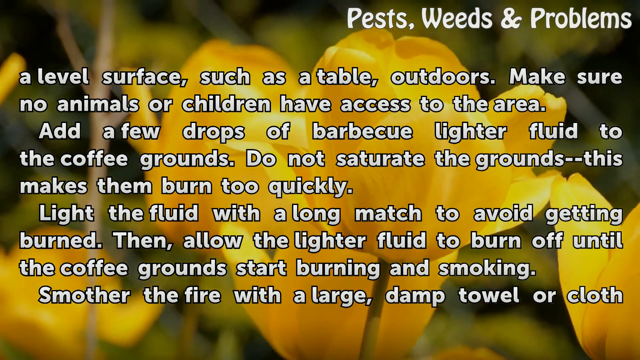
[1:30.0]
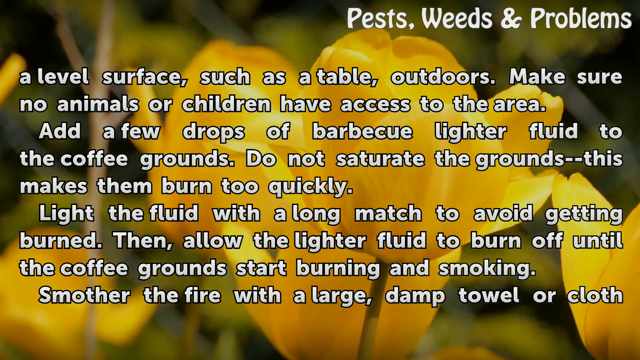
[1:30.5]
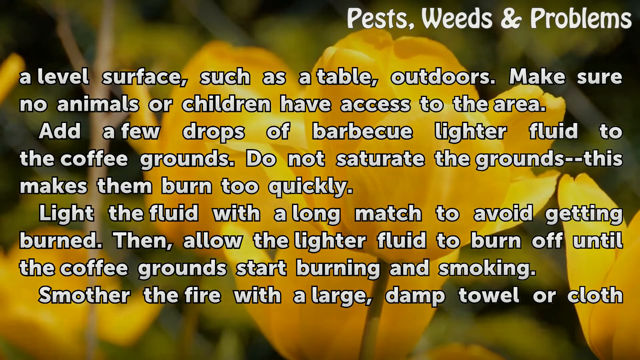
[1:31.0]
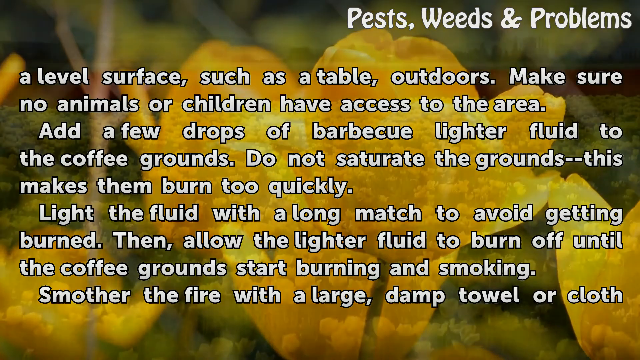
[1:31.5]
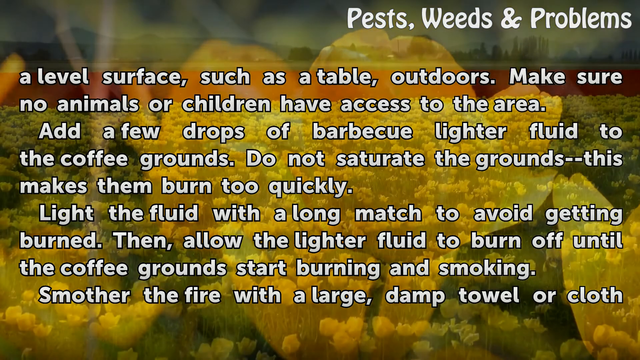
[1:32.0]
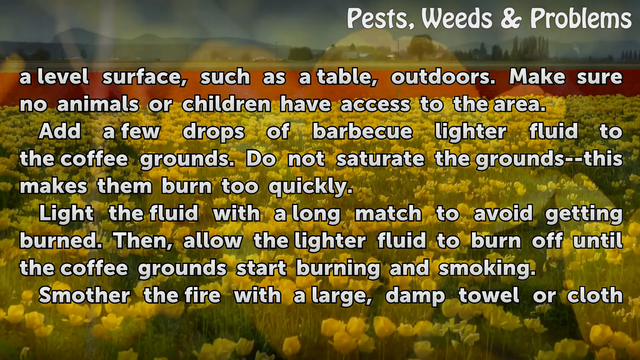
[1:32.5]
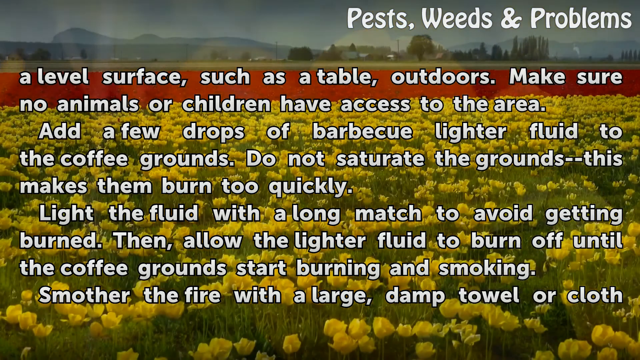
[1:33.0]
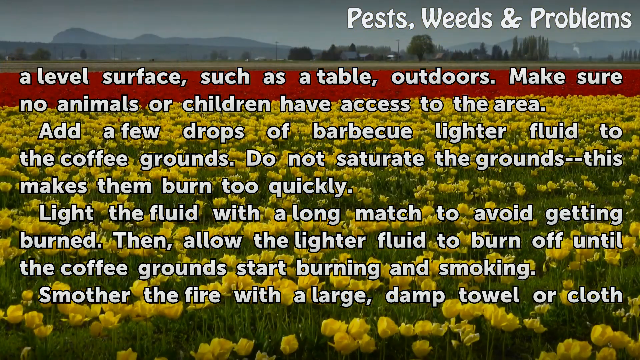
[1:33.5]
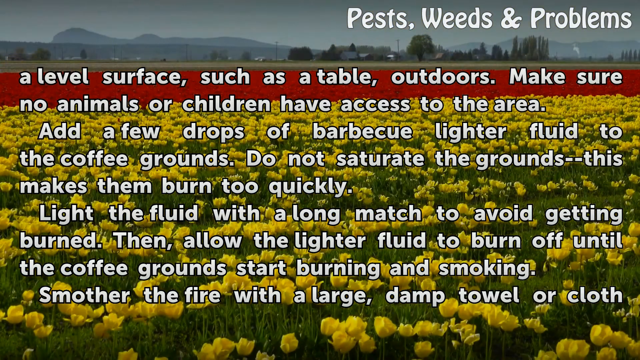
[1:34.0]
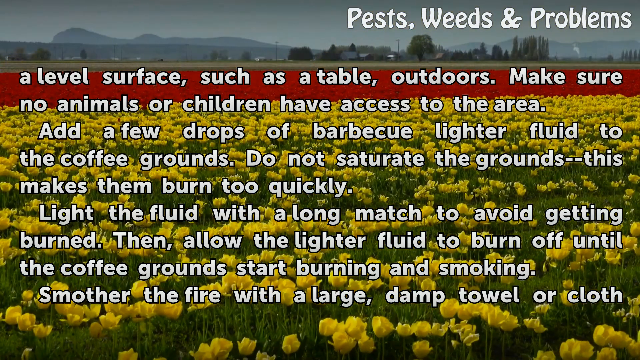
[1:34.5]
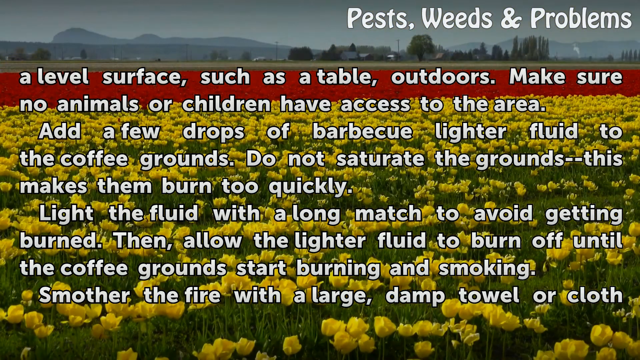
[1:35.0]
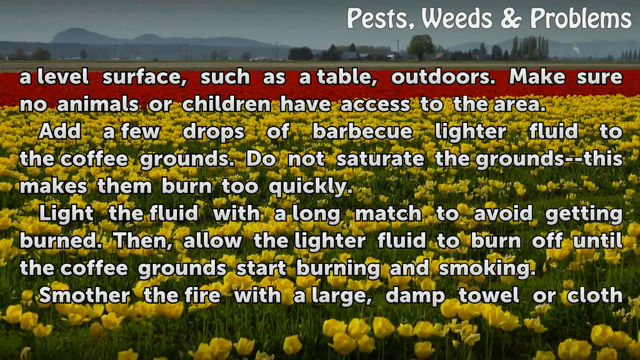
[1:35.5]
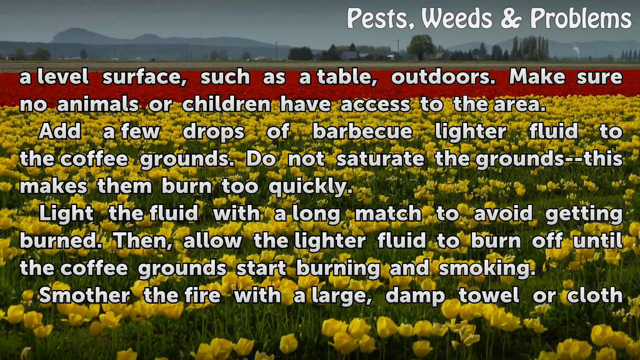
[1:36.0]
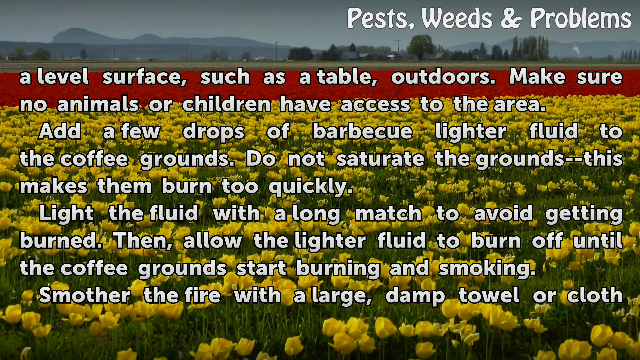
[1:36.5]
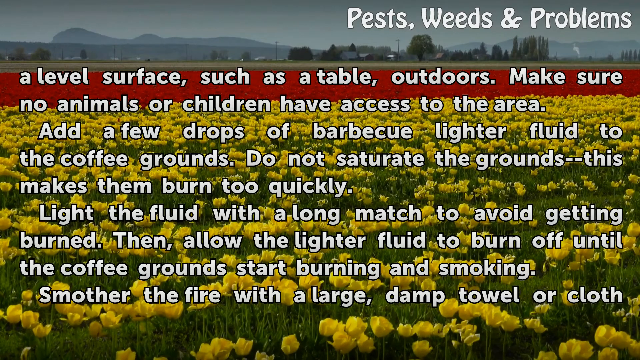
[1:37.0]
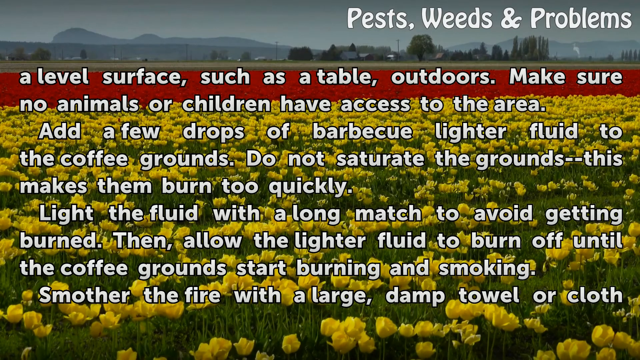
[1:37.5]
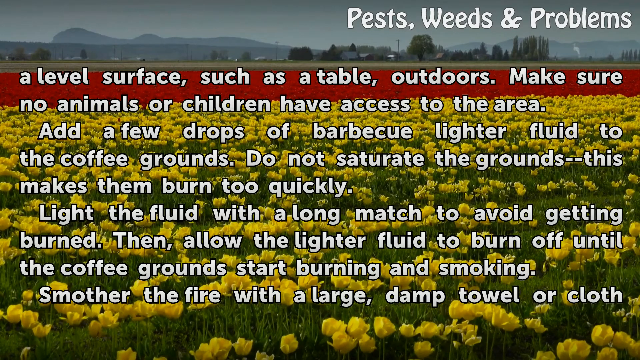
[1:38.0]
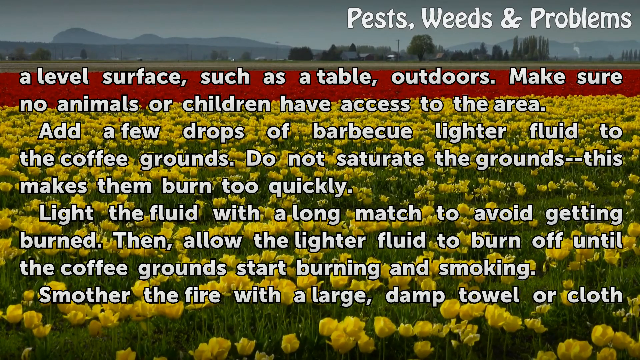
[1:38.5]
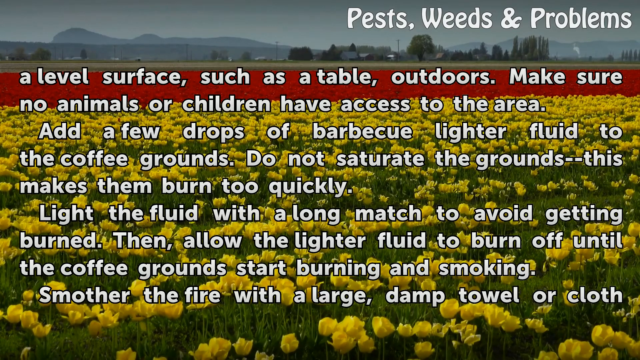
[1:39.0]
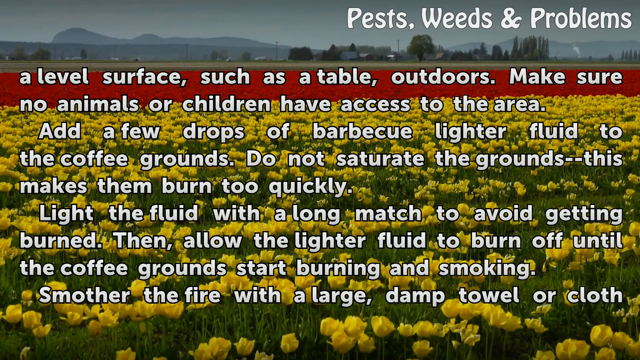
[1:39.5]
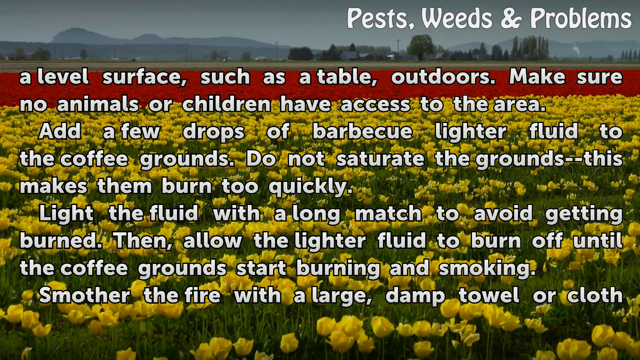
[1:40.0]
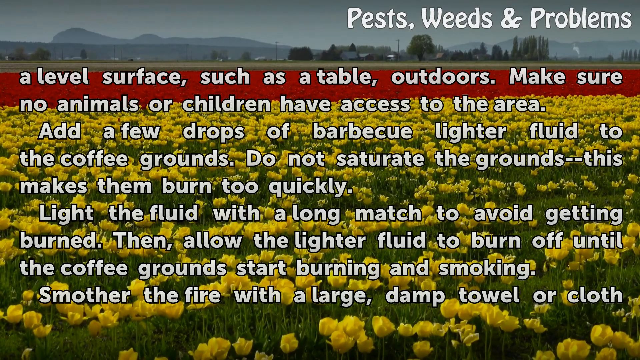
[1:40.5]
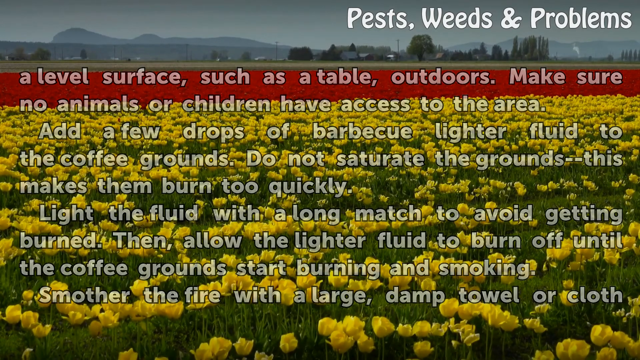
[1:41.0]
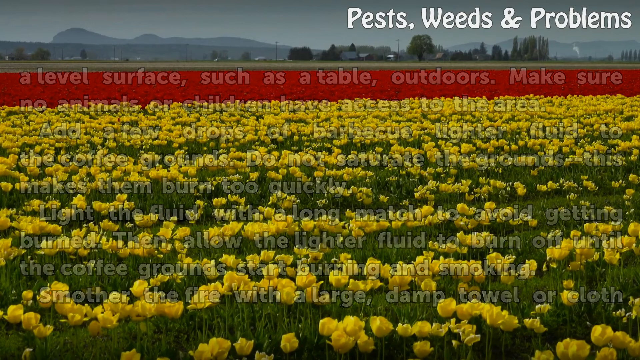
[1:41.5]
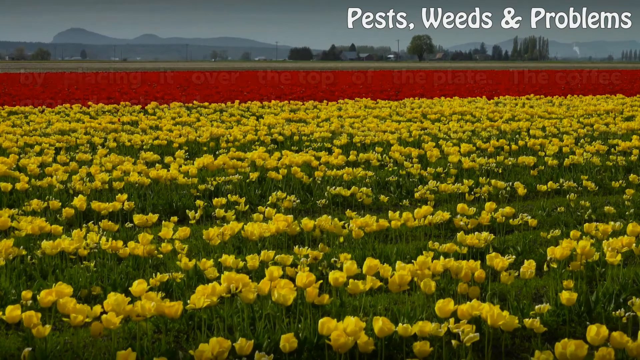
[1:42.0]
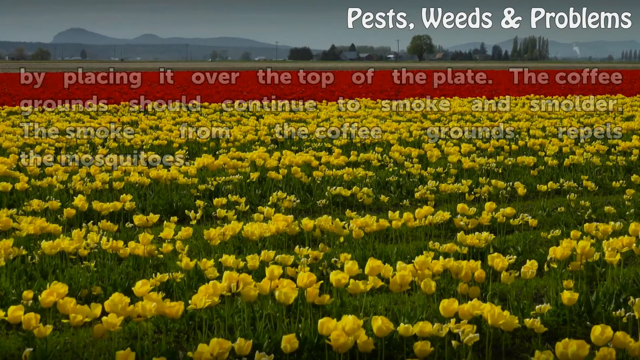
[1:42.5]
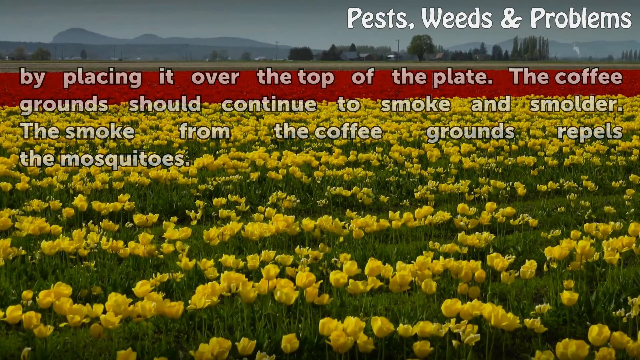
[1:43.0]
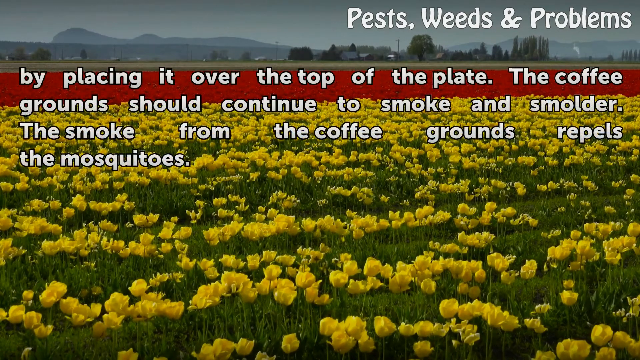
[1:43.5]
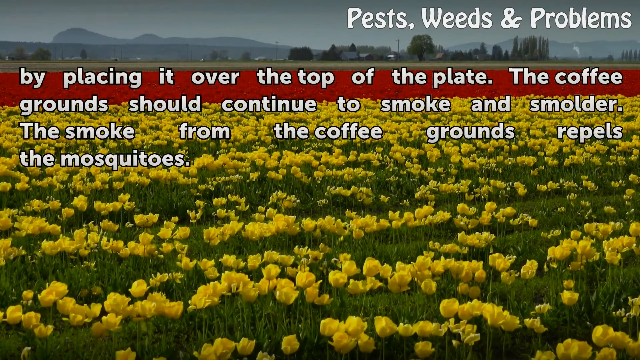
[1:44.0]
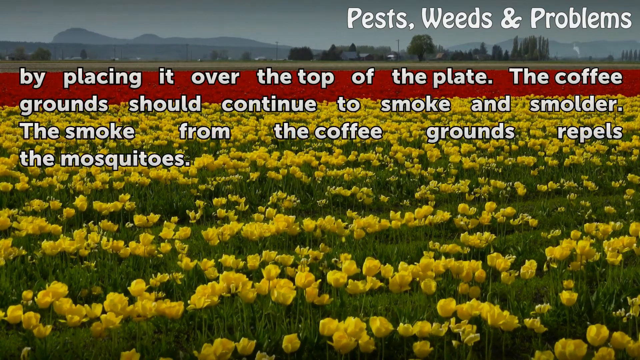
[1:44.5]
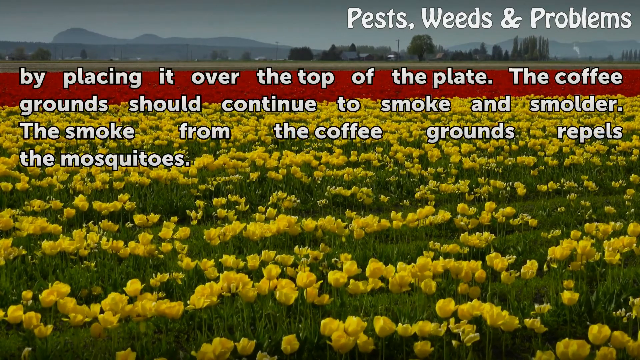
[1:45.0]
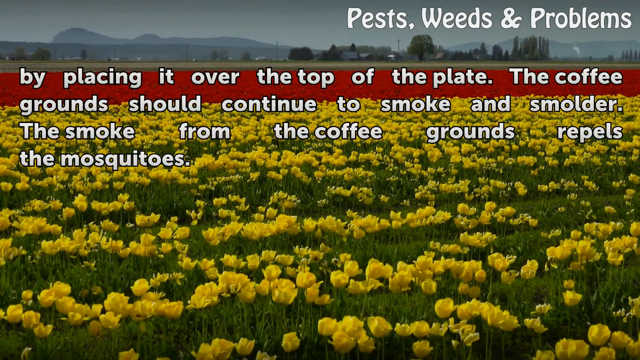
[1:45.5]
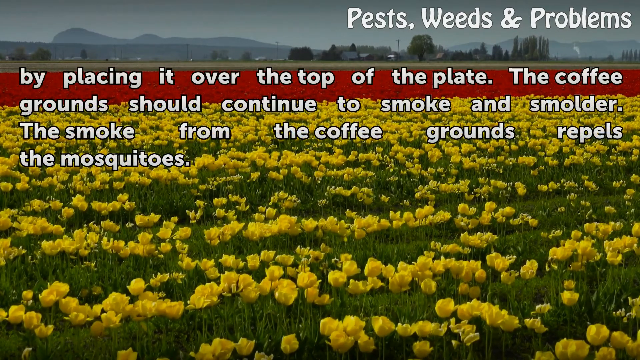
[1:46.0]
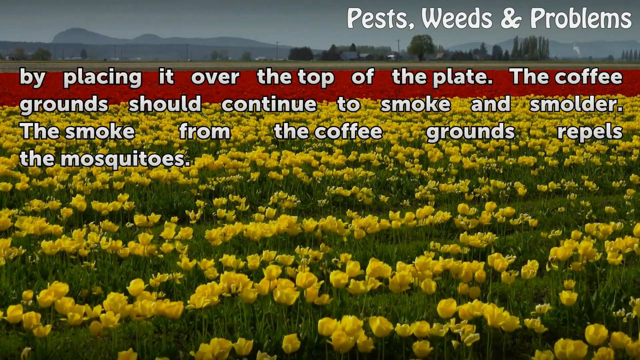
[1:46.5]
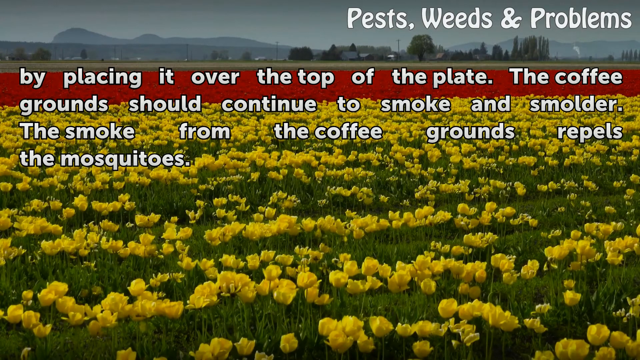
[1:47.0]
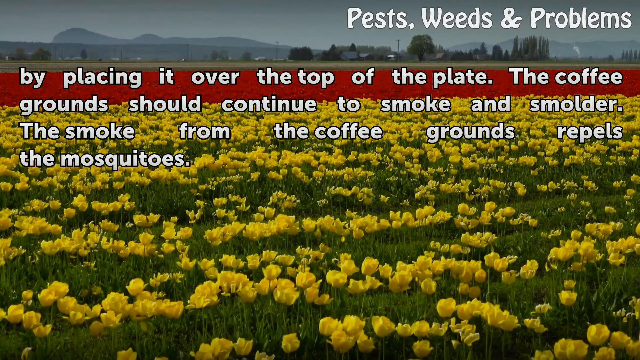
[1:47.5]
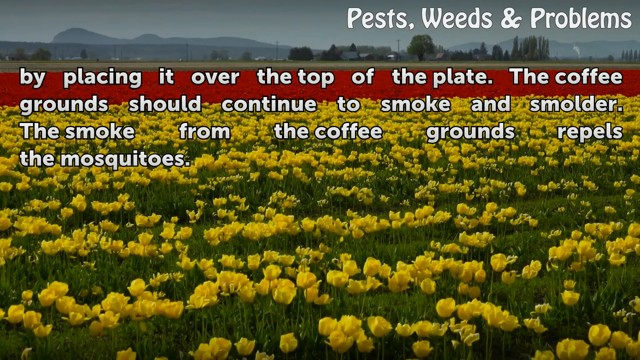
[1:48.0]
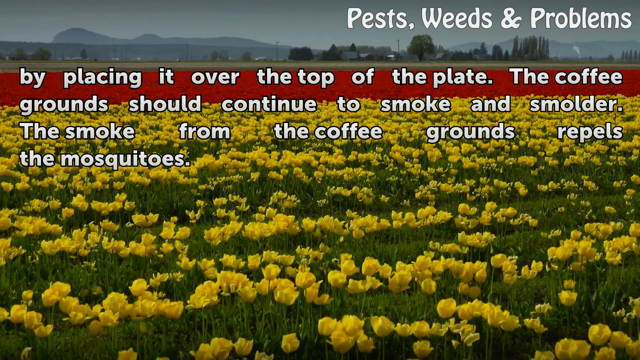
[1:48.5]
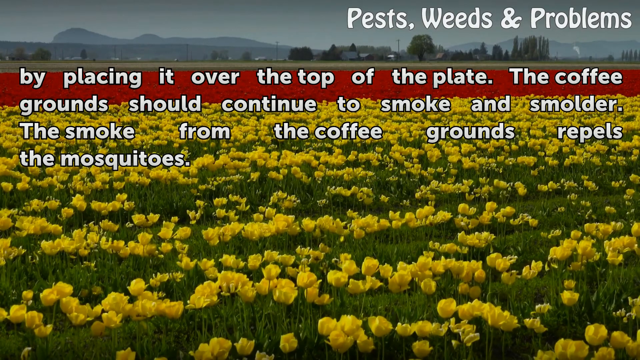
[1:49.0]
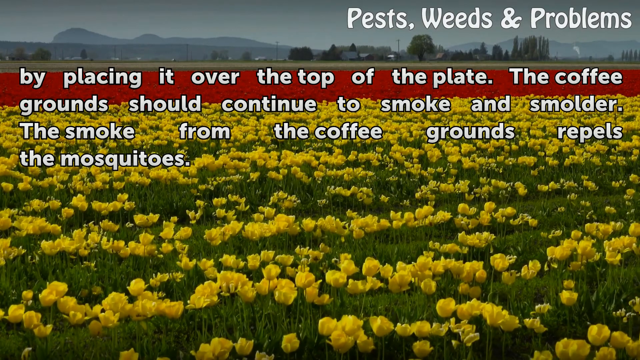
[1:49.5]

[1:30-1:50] The camera stops panning up, and the flowers continue to sway in the breeze before fading away. Behind them appears a very large field of flowers; the front area is all yellow flowers, looking like an ocean made of flowers, all swaying slightly in the breeze. Behind that is an area of red flowers, and beyond that a tree line with maybe a barn, then the silhouette of some hills and a hazy blue sky. The white text fades away and is replaced with new text. The yellow flowers keep swaying back and forth; the closer they are to the front of the image, the more green is visible below them, while farther away they look like a solid color of yellow. At the area of red flowers no green stems or stalks are visible, only a sea of red.